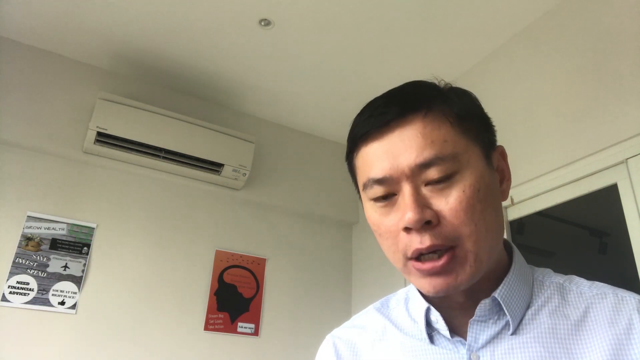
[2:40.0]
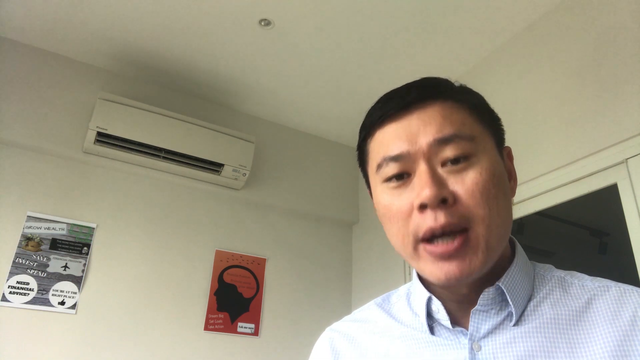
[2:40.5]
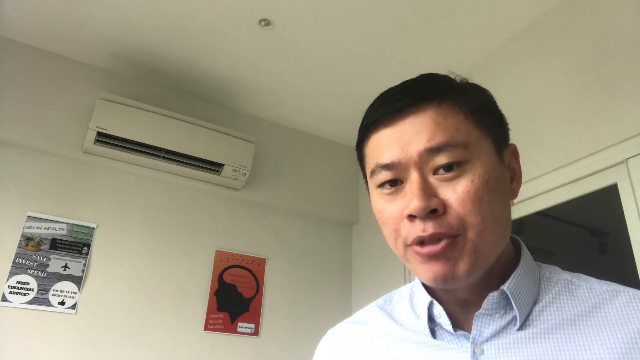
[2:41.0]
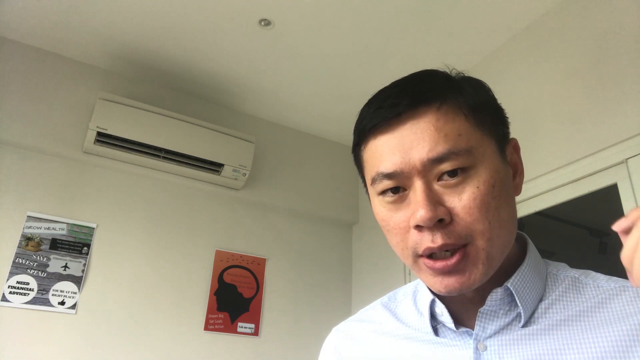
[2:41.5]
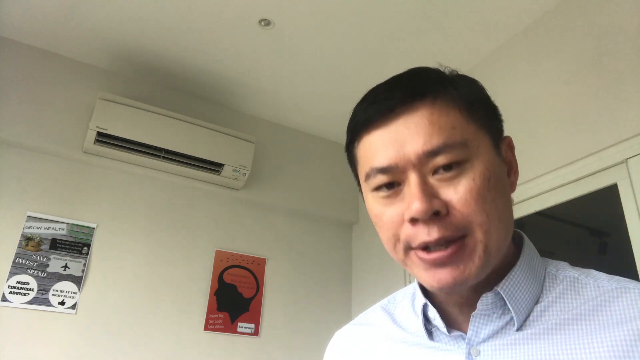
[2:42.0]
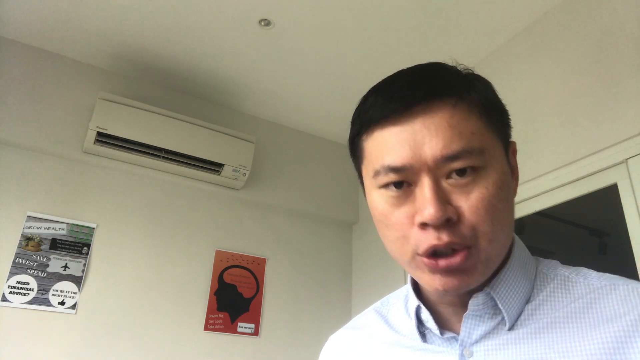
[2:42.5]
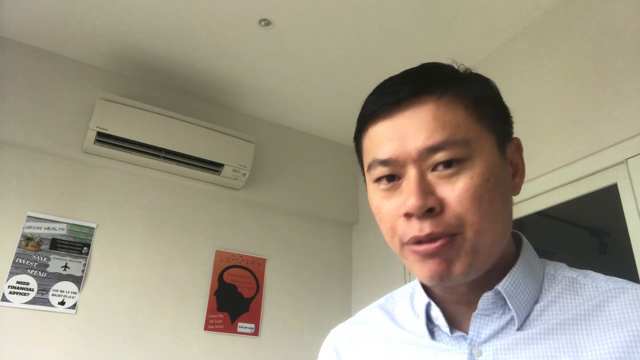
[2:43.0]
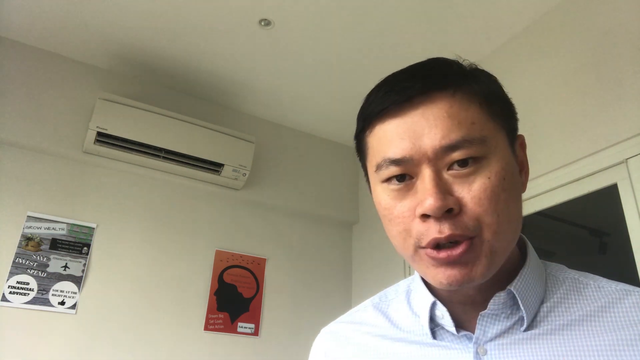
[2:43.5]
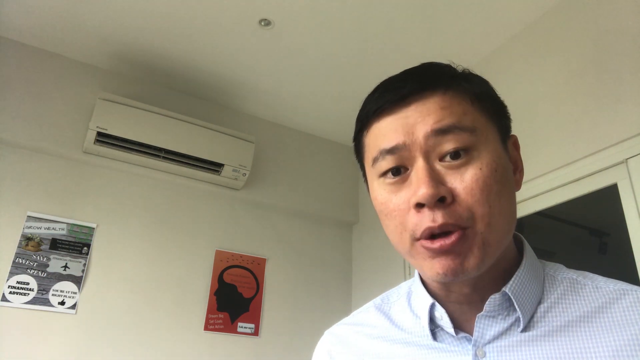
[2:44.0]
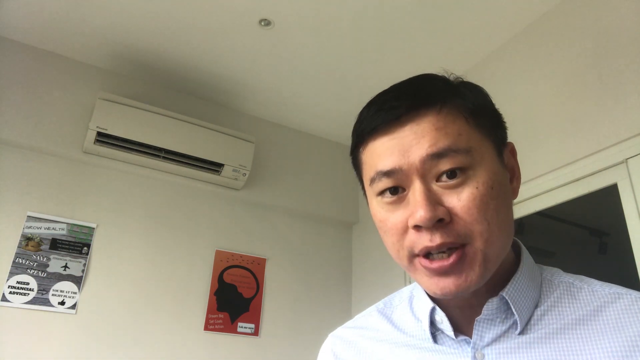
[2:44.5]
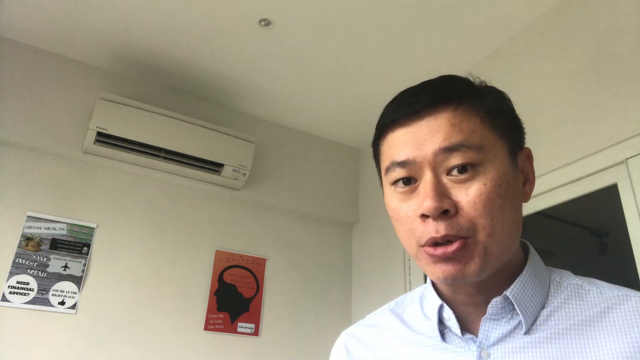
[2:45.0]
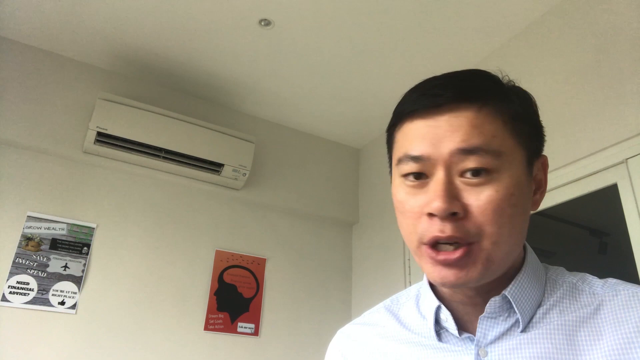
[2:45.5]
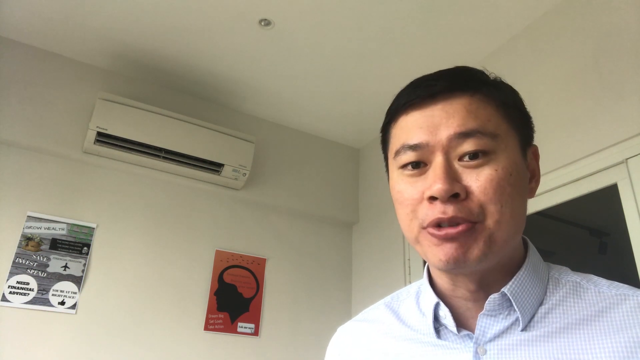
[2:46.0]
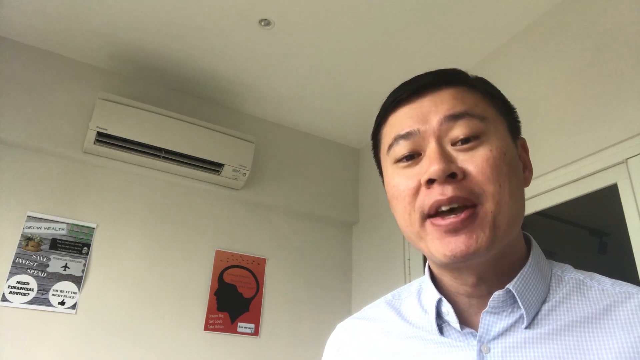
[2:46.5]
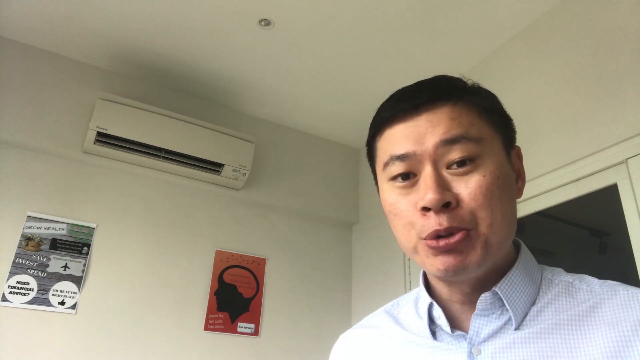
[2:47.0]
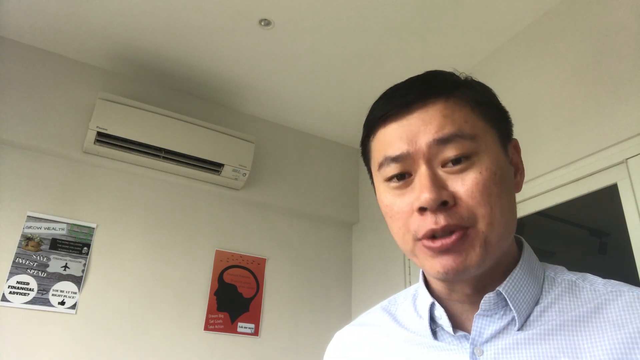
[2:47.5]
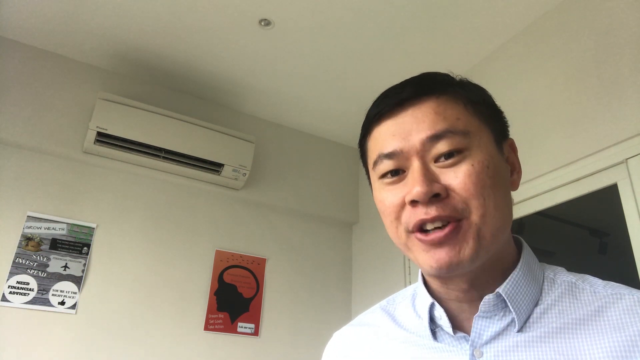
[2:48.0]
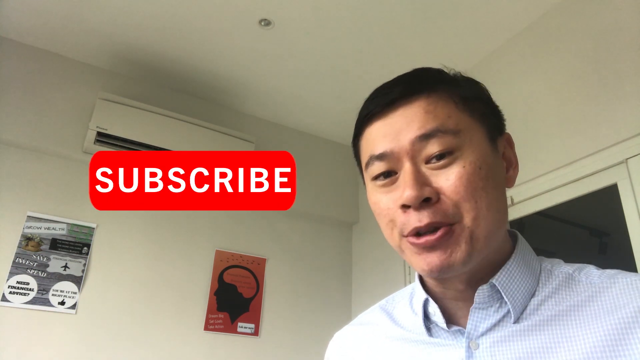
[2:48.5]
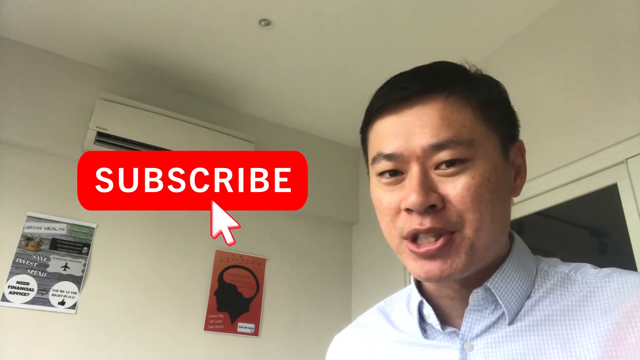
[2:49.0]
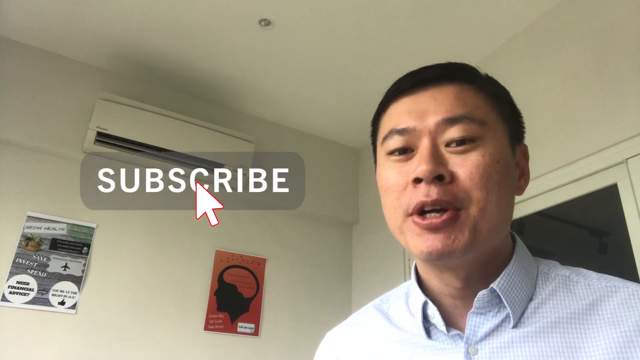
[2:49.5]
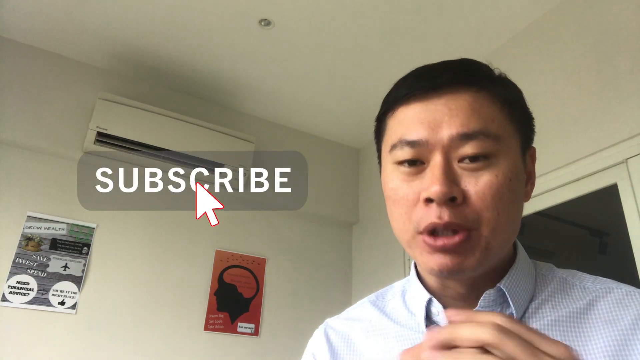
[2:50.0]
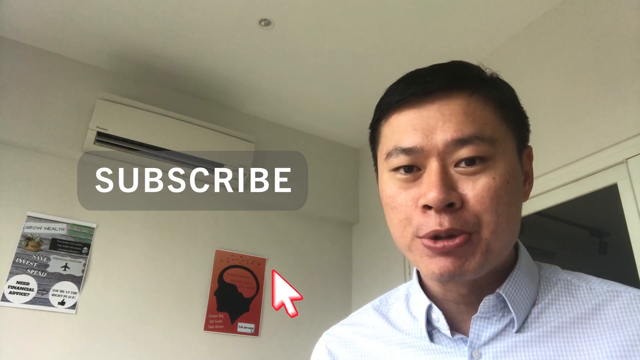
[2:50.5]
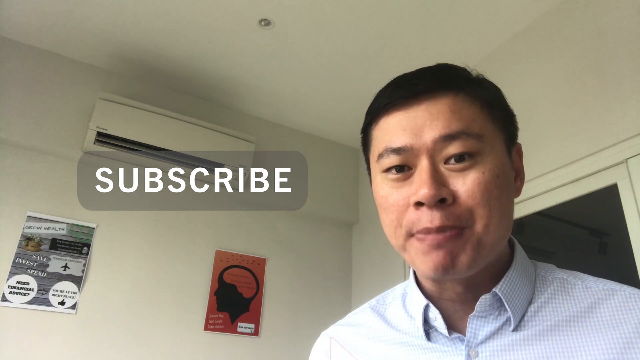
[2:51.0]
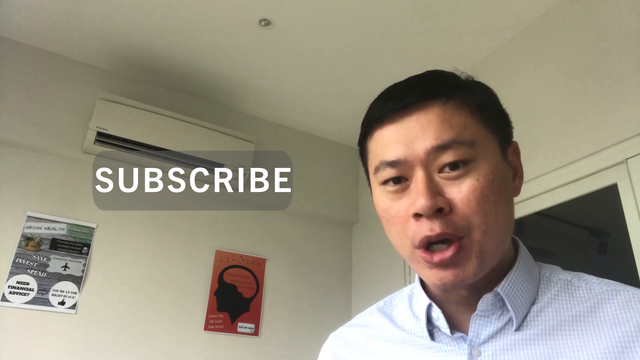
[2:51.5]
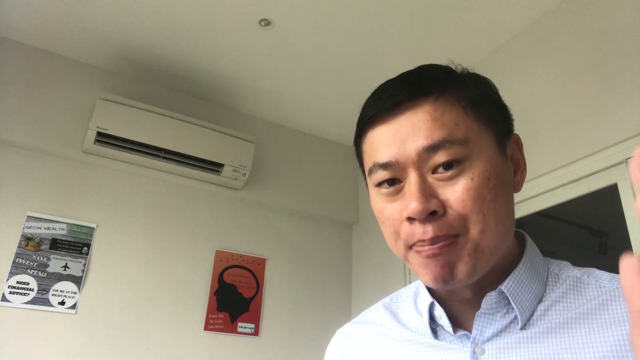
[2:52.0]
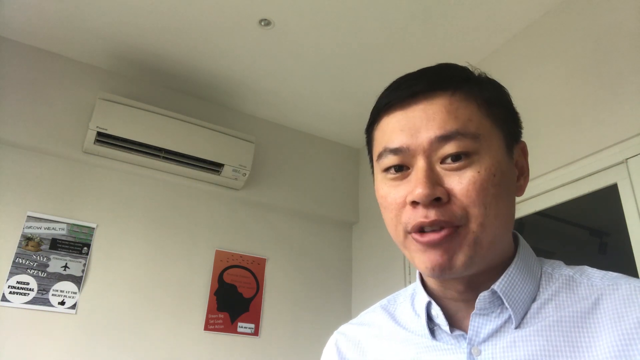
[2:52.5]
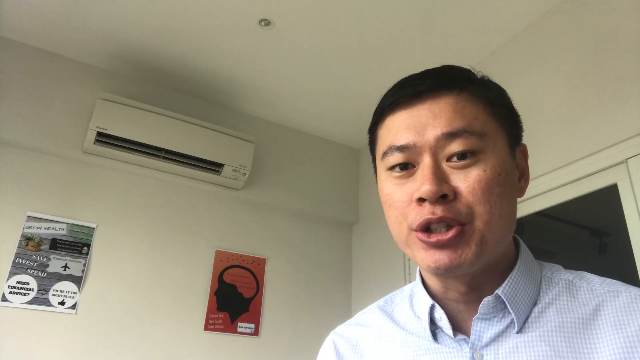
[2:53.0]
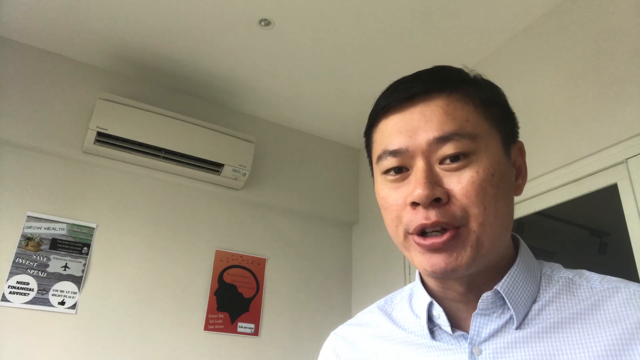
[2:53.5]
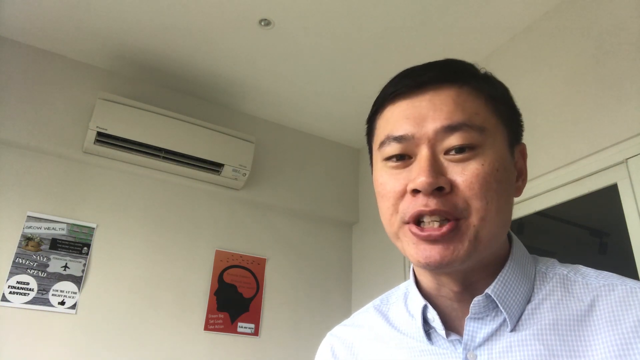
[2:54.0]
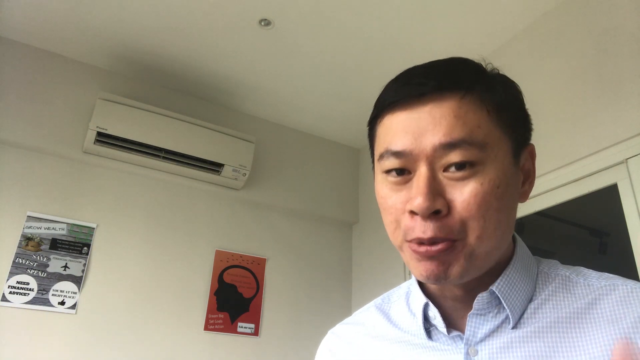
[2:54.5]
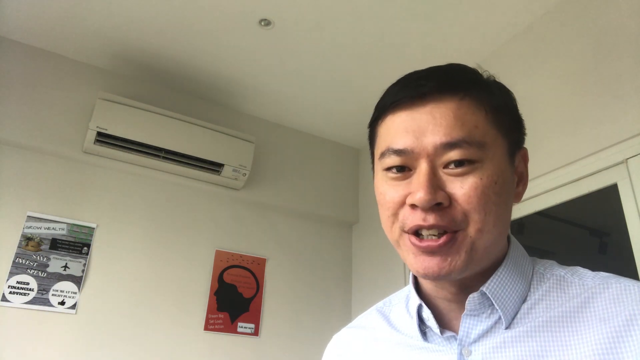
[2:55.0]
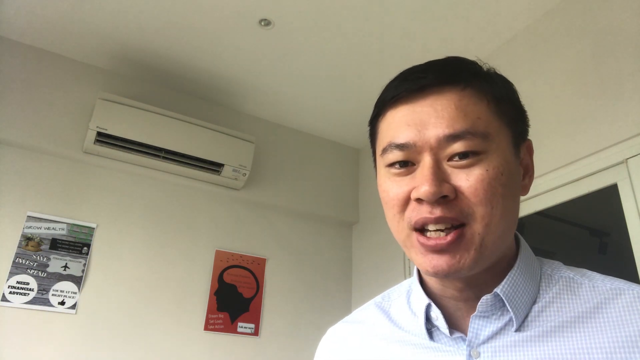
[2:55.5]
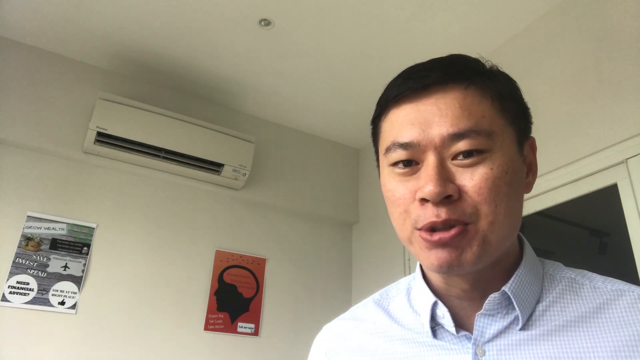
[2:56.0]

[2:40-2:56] The Asian man, probably in his 30s, maybe 40s, is at his house. He has jet black hair cut very short, though not a buzz cut, probably about an inch on top and on the sides, and a completely smooth face with no facial hair. His short collar looks like it has buttons, with the collar kind of sticking up on the sides, and he wears no tie. He speaks casually in his house. The camera is in front of him, tilted up, so his face is clearly visible along with part of the ceiling. To the left on the ceiling is what looks like a white box with a round lens, and what looks like the air-conditioning unit is high up on the back wall, with a couple of vents. Lower on the same wall is the poster with a couple of white circles, a thumbs up, and some kind of bold element that can't be read because it is fuzzed out. The orange poster has the brain shape, with silhouettes of a nose and mouth facing left. He speaks more, and a subscribe button appears: a rectangle with rounded edges, with a large white arrow pointing to it; when clicked, it turns translucent. He then says thanks, holding his hand up for a moment, and looks like he is about to turn the camera off, pressing something.